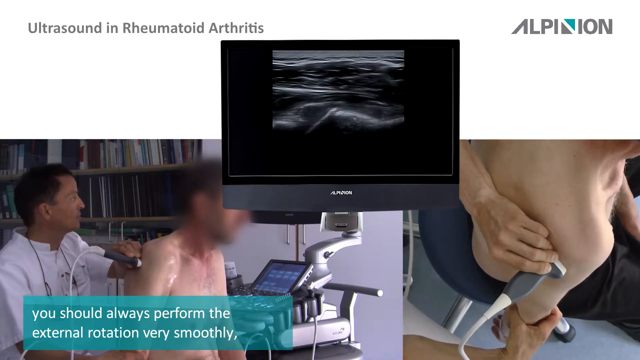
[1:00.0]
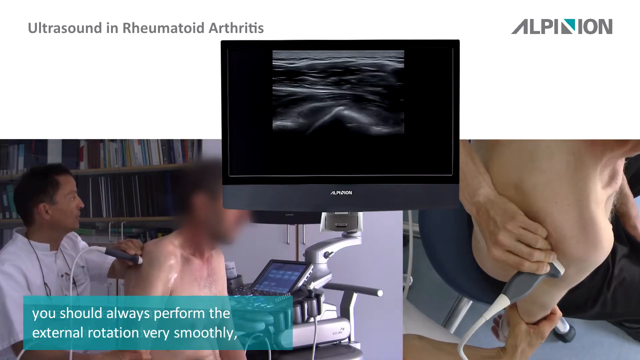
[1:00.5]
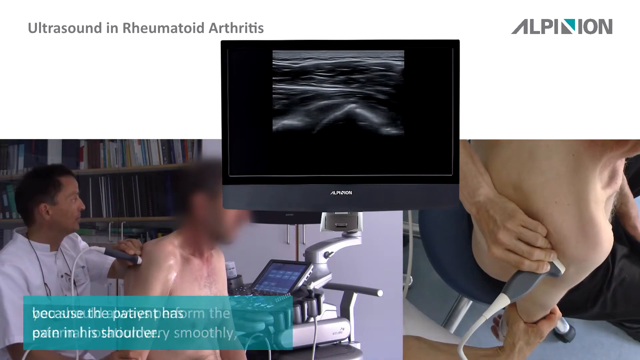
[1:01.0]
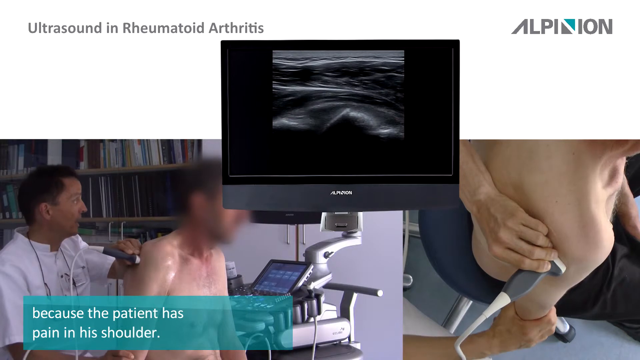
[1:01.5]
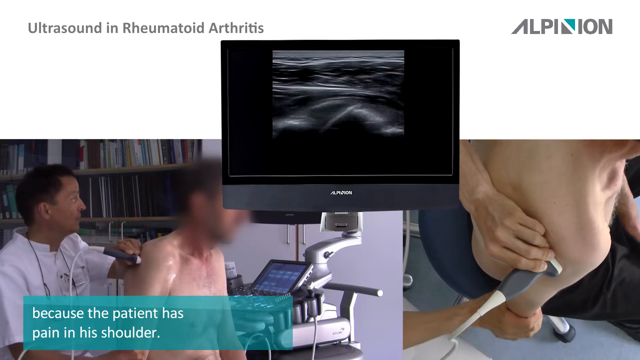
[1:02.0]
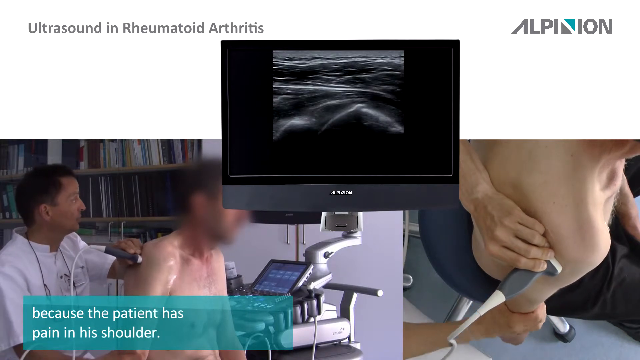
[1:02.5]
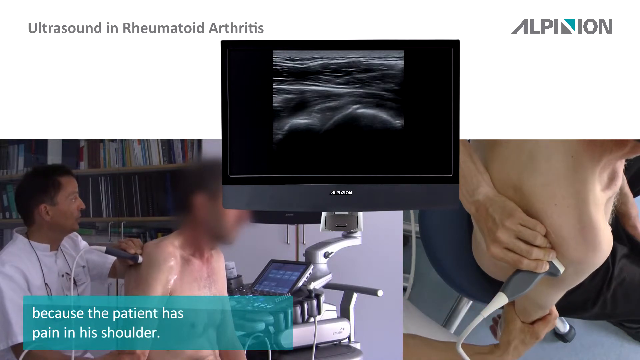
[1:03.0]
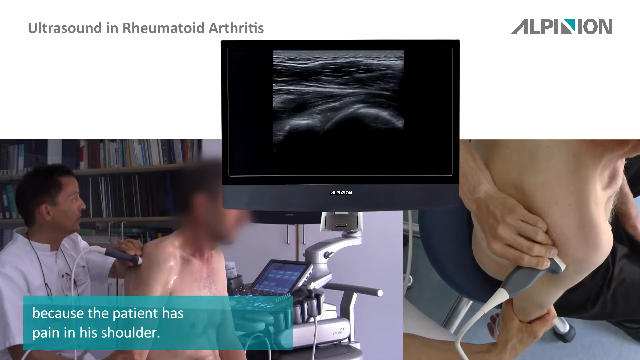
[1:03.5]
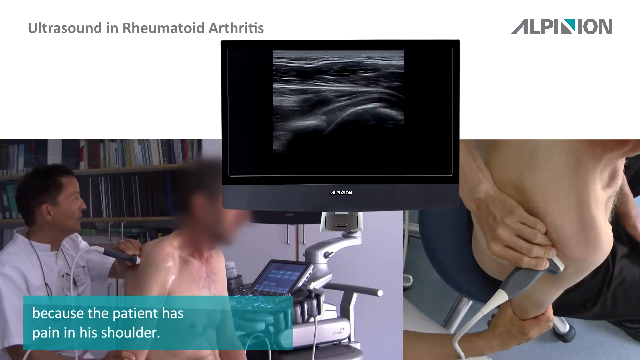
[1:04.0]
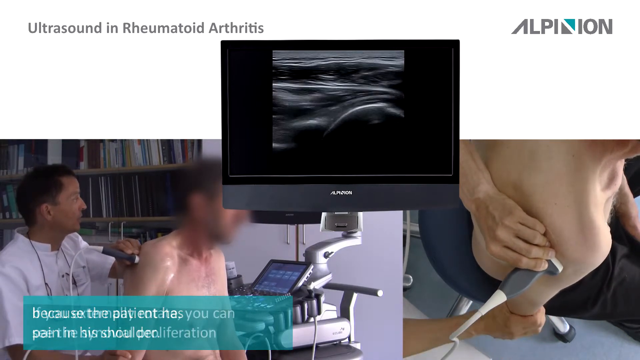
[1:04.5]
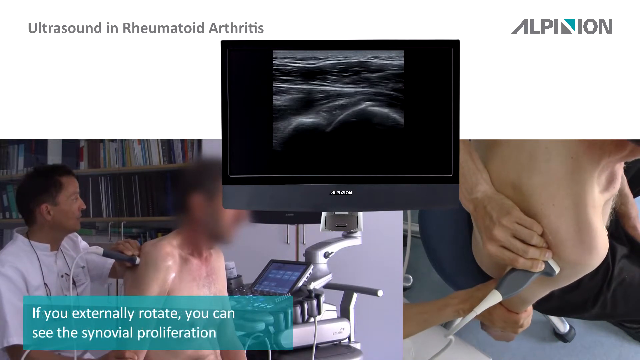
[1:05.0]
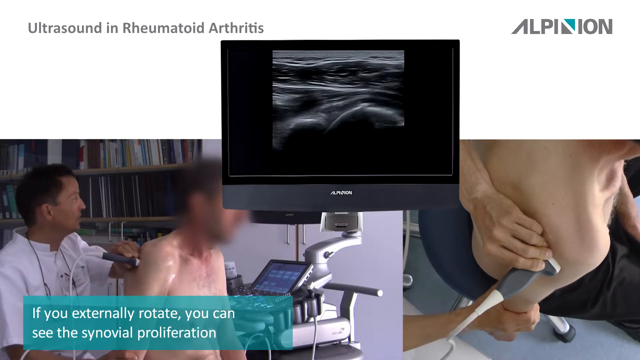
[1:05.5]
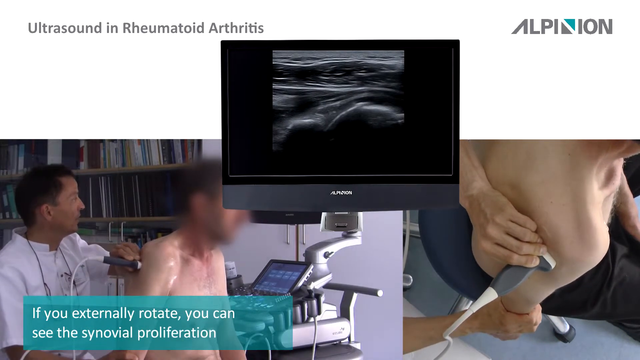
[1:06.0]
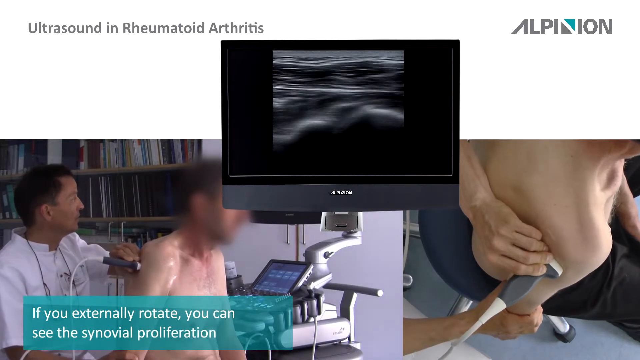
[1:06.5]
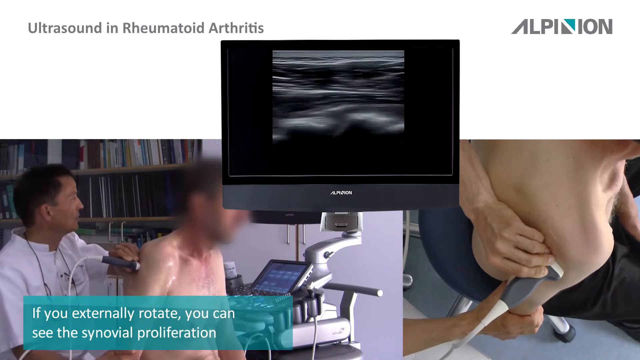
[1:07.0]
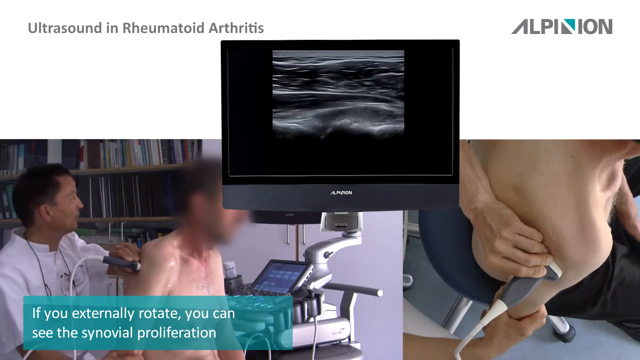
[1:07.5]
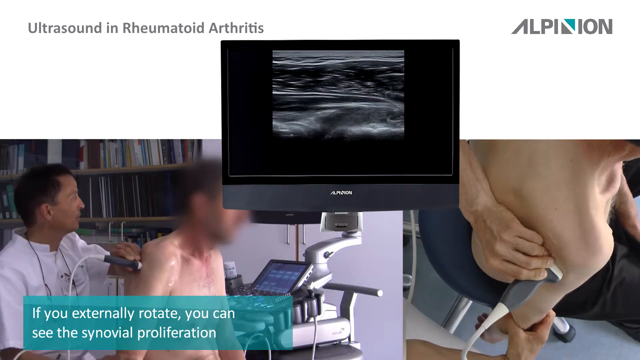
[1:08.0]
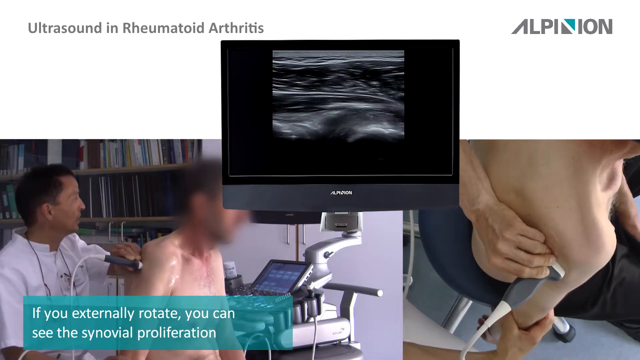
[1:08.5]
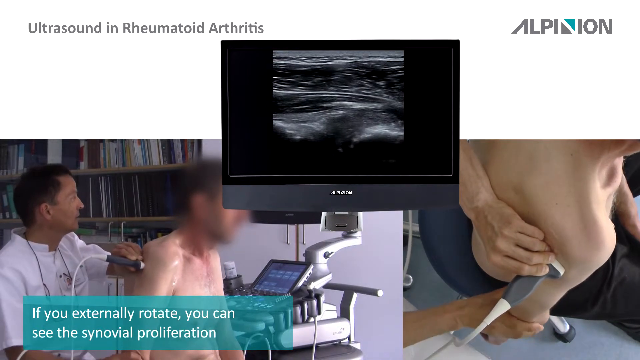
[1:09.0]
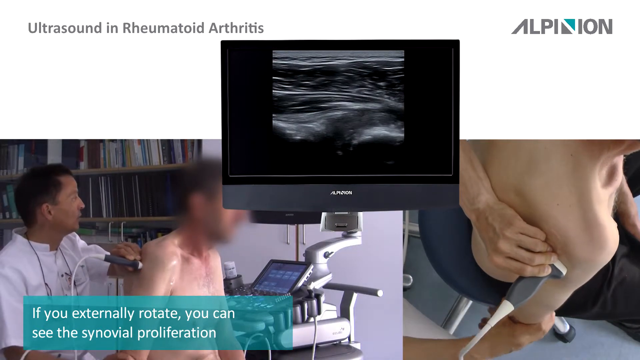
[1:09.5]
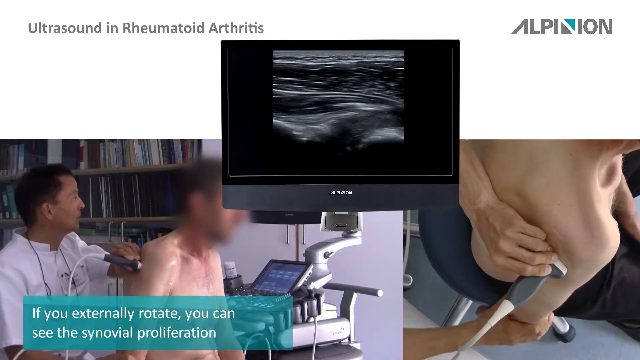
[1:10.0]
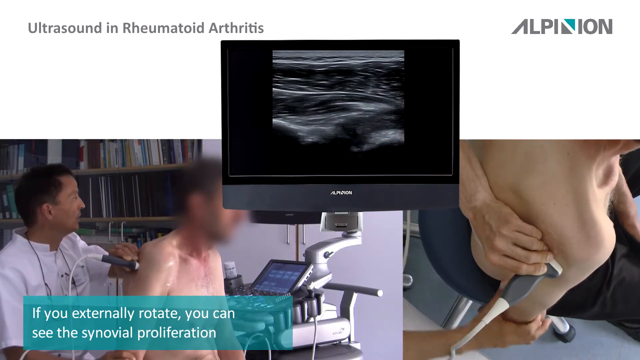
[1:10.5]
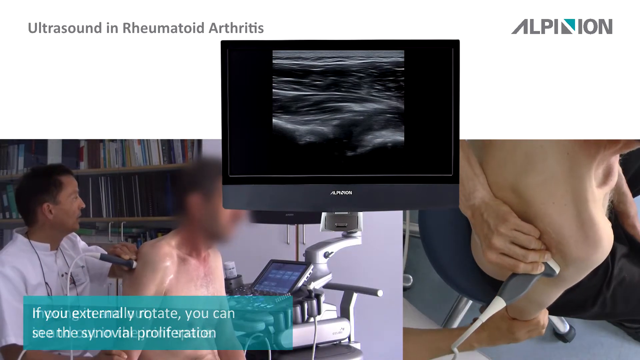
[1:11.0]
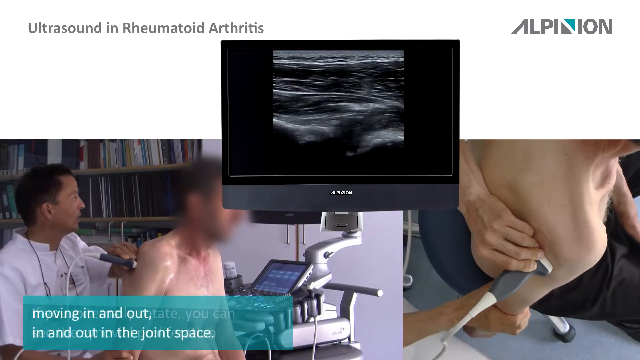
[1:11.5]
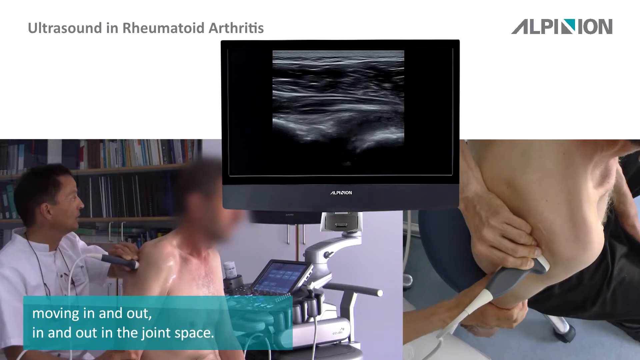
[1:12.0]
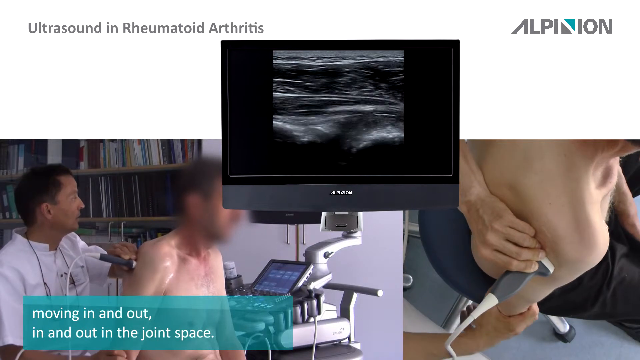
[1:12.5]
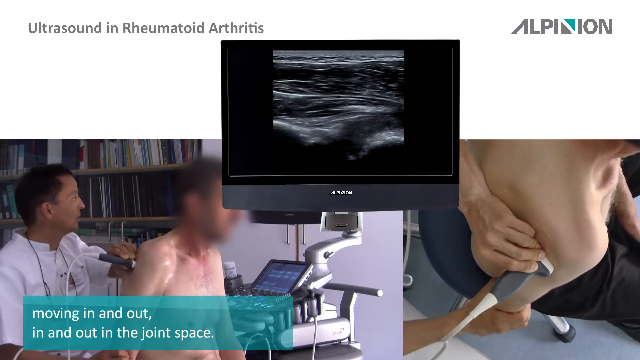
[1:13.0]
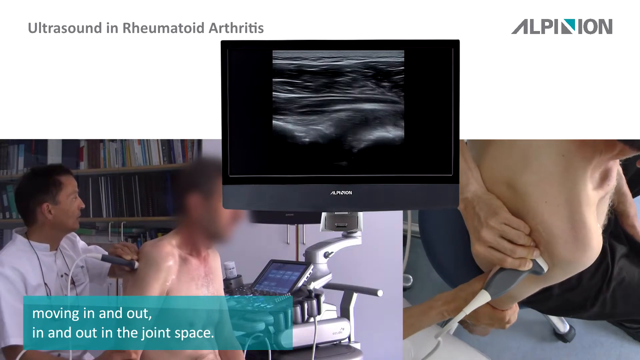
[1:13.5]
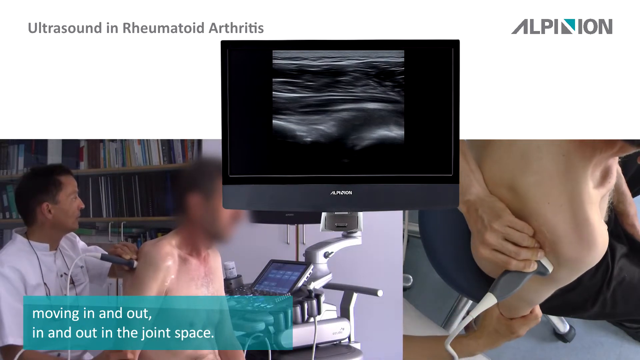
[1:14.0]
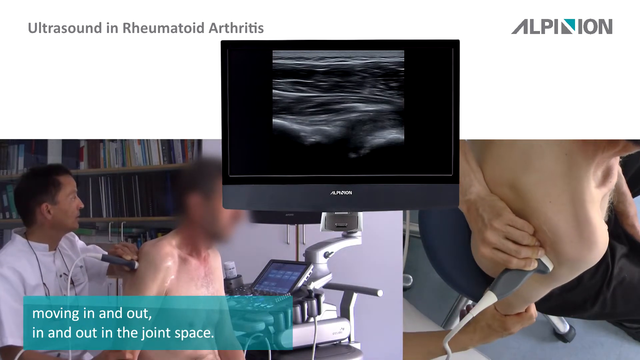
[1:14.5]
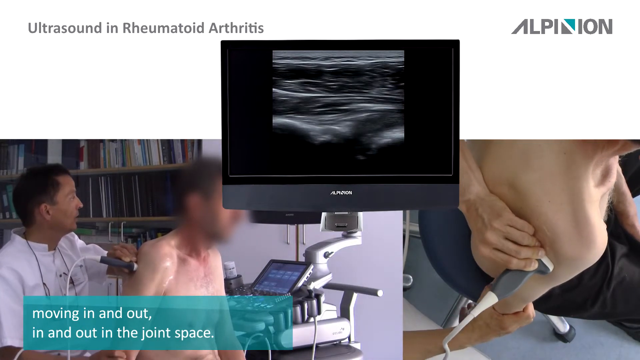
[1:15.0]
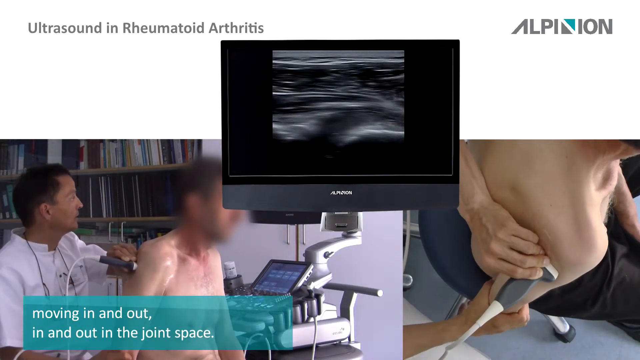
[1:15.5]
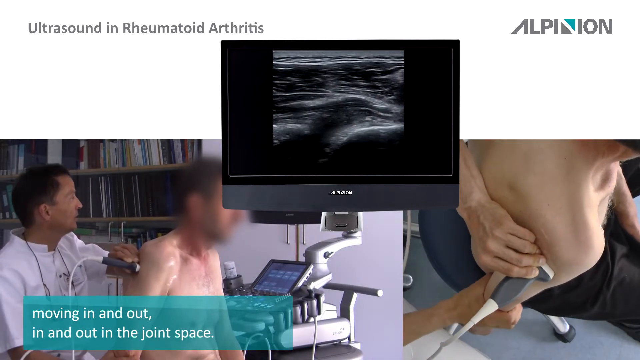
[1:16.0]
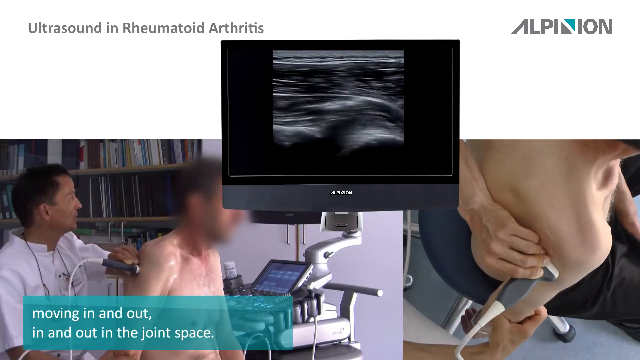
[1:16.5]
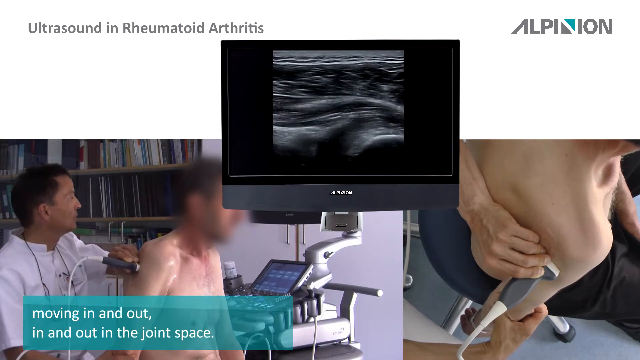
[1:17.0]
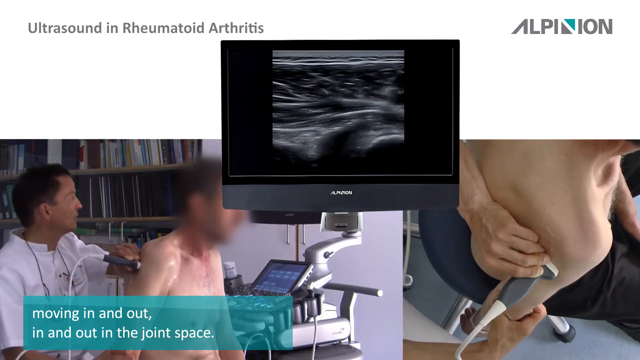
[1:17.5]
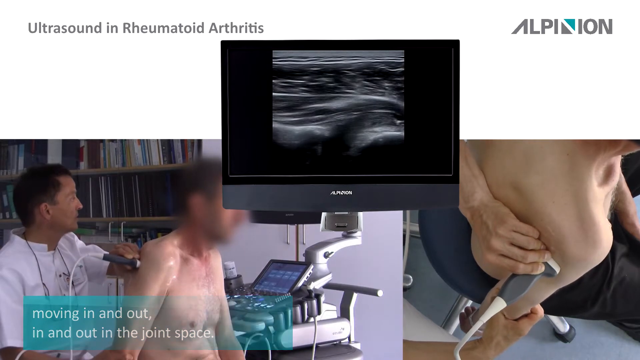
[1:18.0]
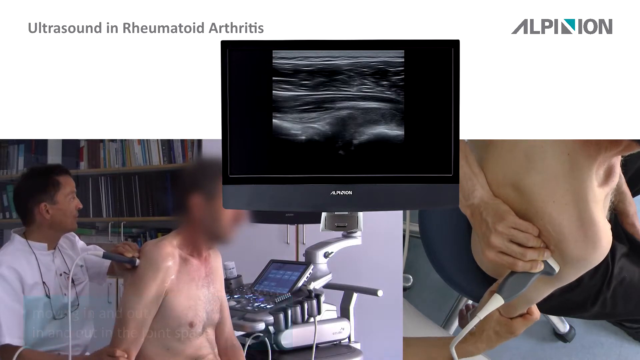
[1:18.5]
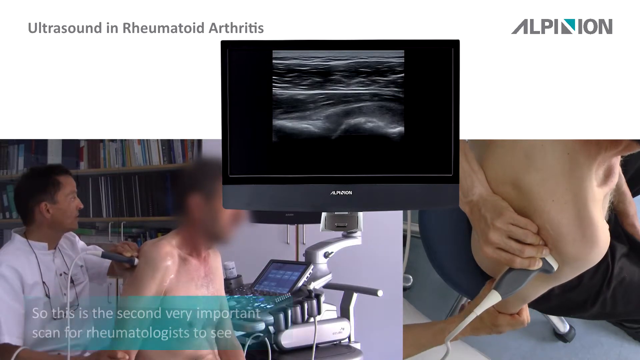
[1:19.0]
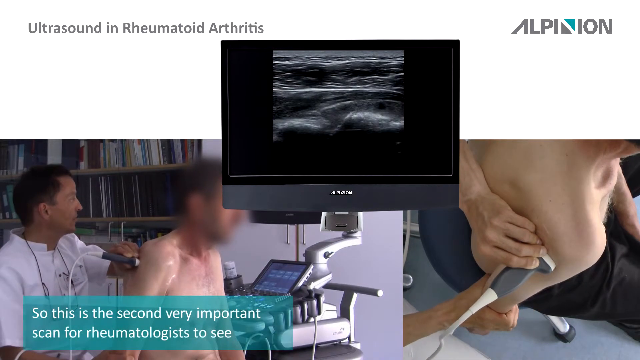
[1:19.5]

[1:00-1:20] Text on the screen reads: "Because the patient has pain in his shoulder, if you externally rotate you can see the synovial proliferation moving in and out, in and out in the joint space. So this is the second very important scan for rheumatologists." The demonstration continues. The doctor appears to be holding the ultrasound in his left hand, and with his right hand he has grabbed the man's arm and is gradually twisting it. The left hand holding the ultrasound seems to stay in place; he is not moving the ultrasound, only the arm below the ultrasound equipment.